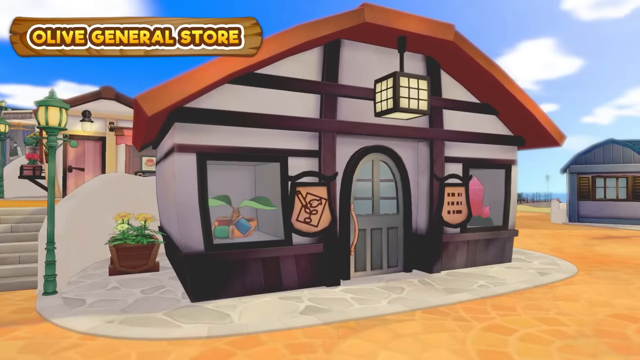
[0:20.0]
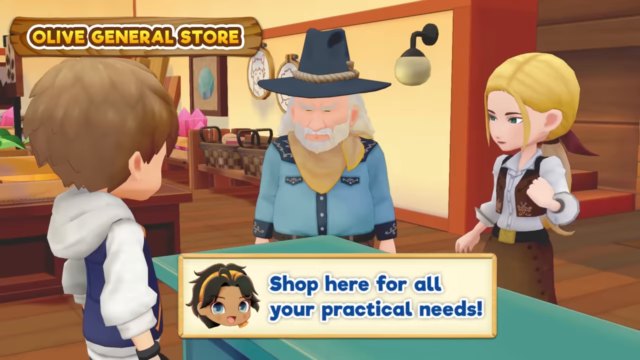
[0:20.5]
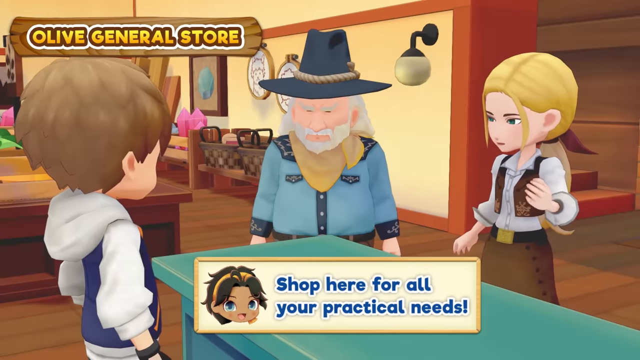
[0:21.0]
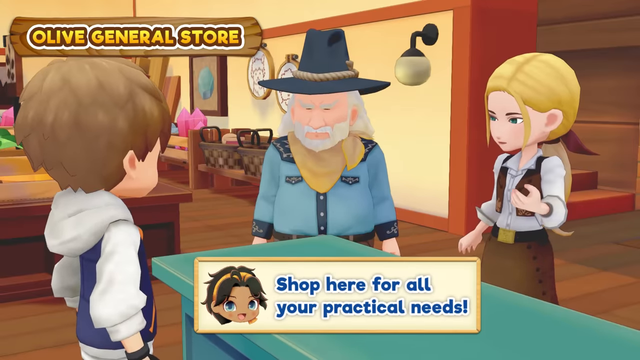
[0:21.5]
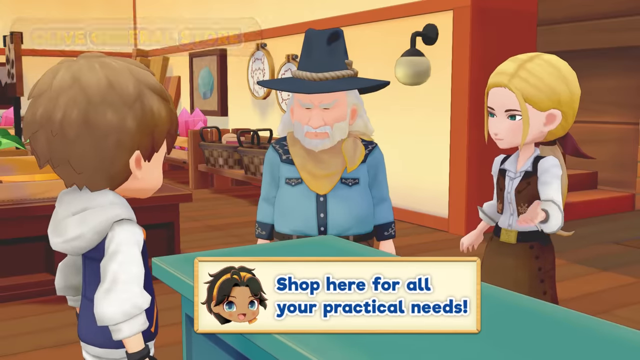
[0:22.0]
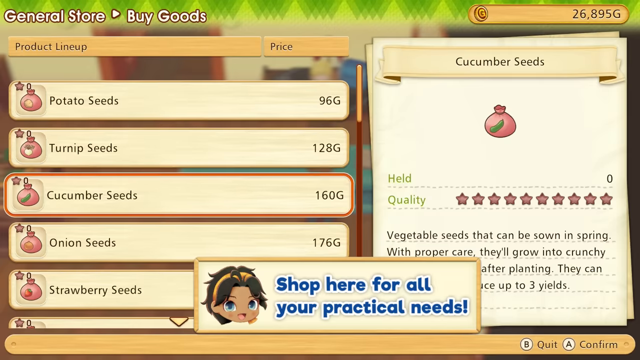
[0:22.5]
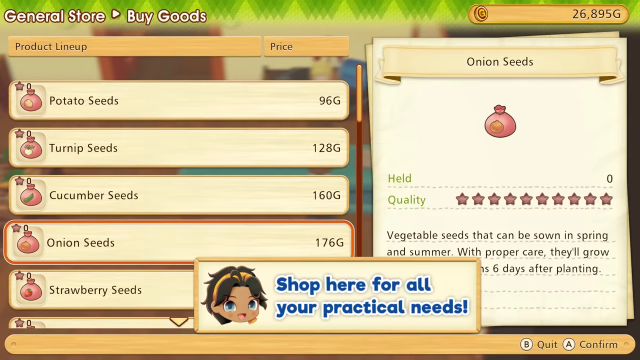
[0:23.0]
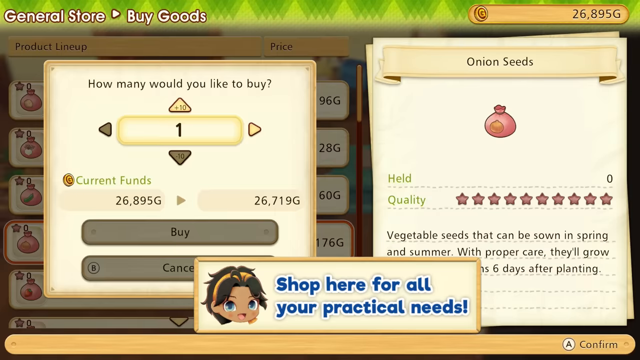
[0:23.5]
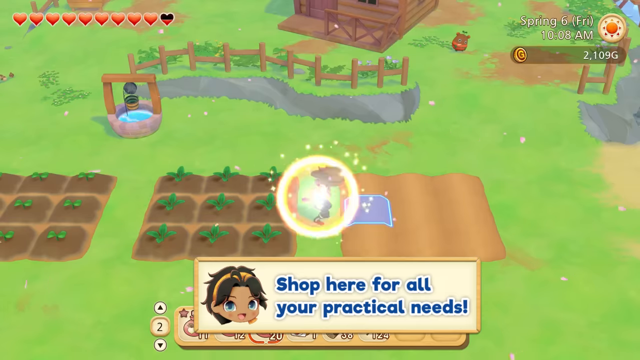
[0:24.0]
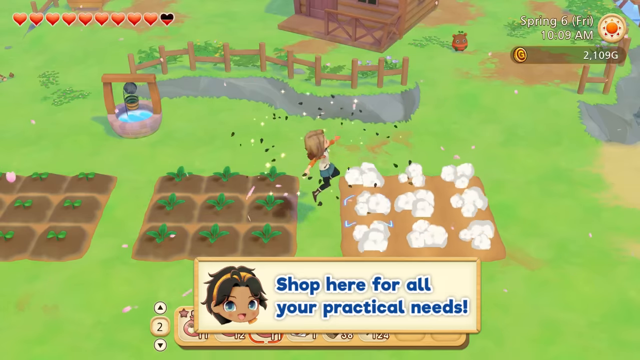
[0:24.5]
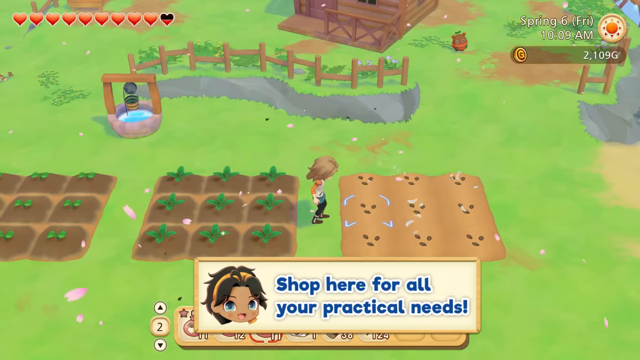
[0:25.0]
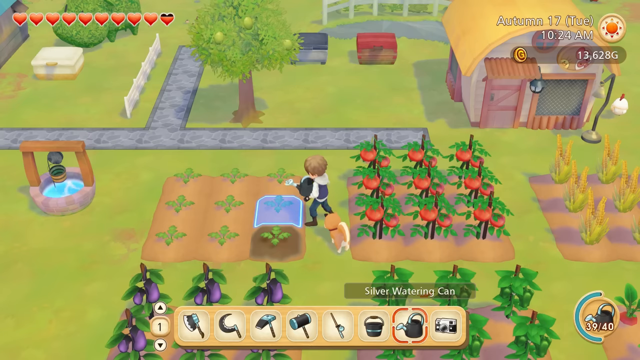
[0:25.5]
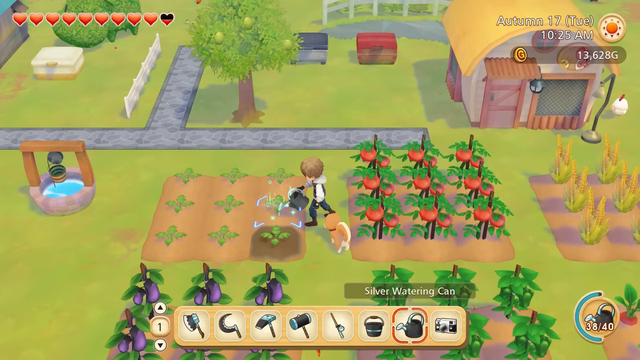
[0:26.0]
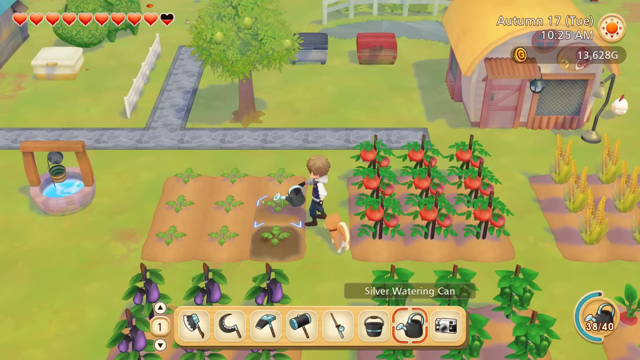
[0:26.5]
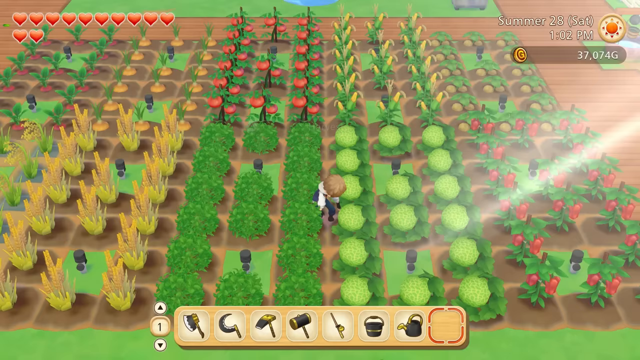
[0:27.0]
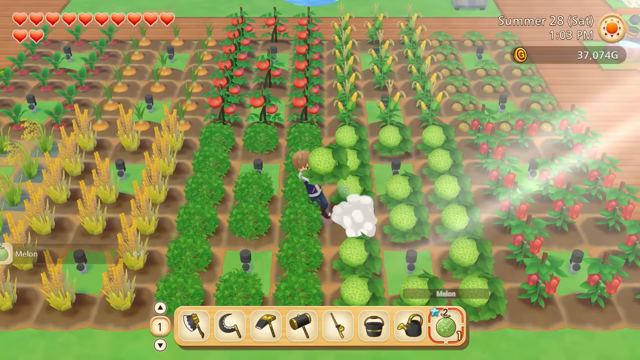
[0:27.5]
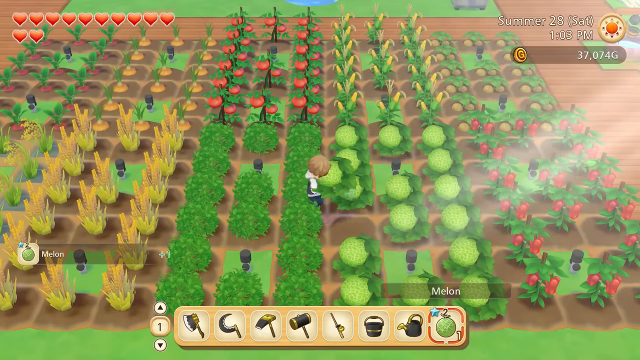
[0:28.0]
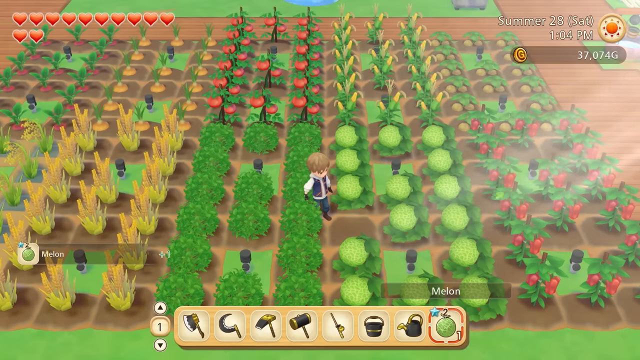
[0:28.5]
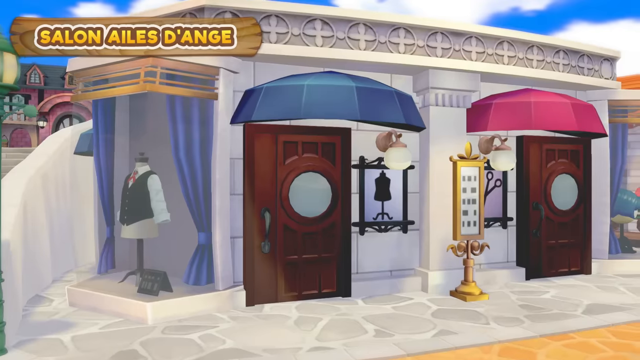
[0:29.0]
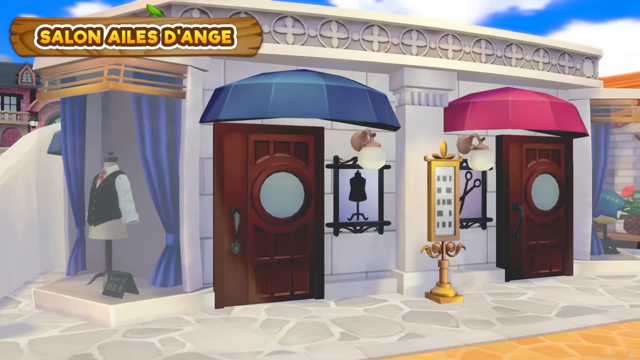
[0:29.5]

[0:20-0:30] At the general store there are a bunch of seeds, and it looks like crops can be planted. There is a salon, a variety of vegetables, and apparently a house with some land for planting. The game is shown planting crops, harvesting crops and shopping at stores, seemingly a life simulator.